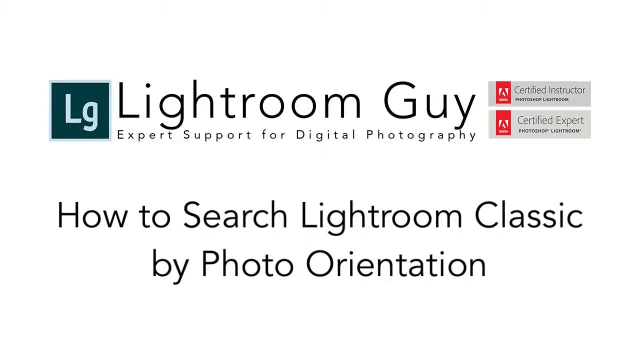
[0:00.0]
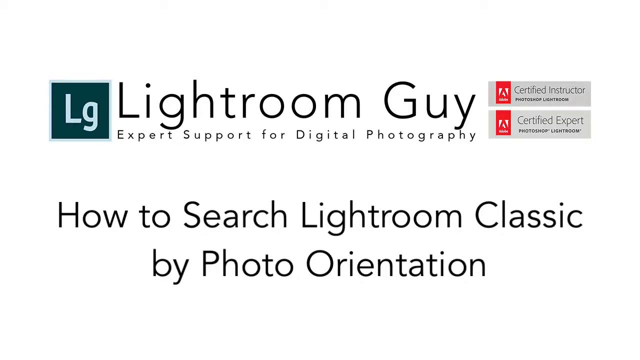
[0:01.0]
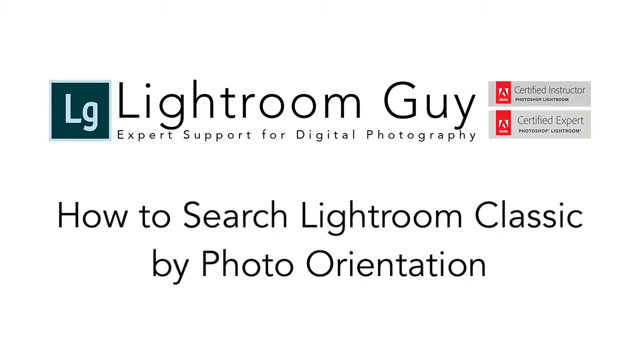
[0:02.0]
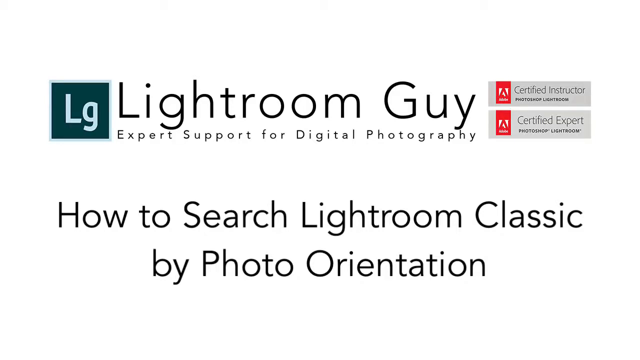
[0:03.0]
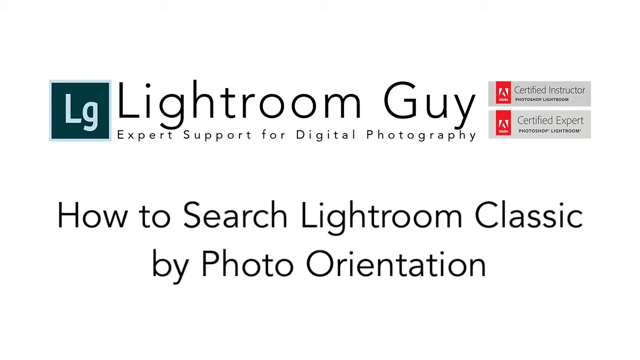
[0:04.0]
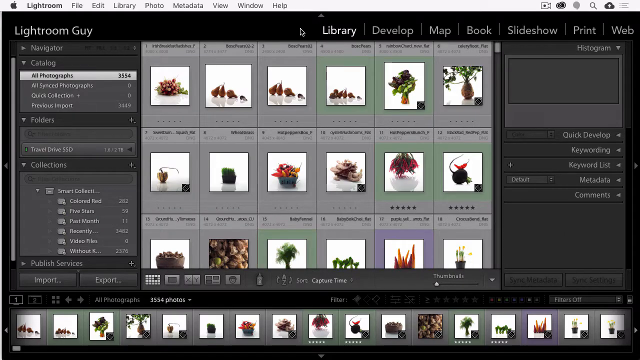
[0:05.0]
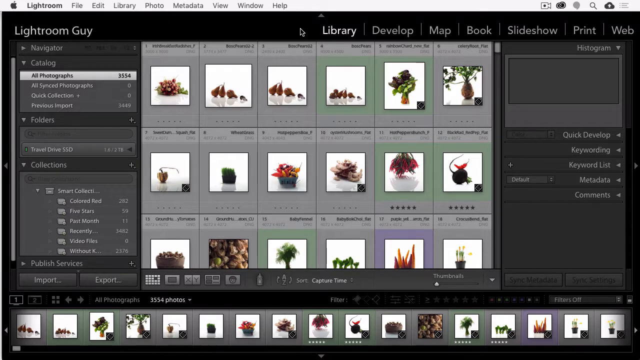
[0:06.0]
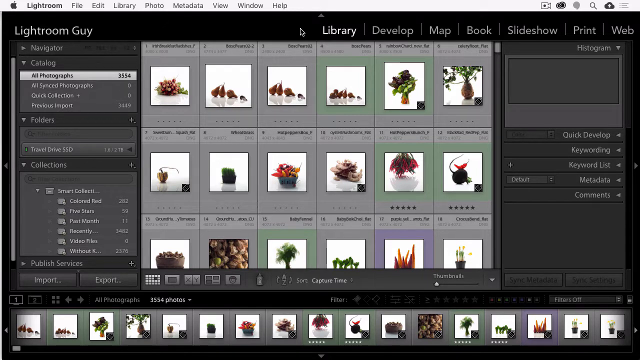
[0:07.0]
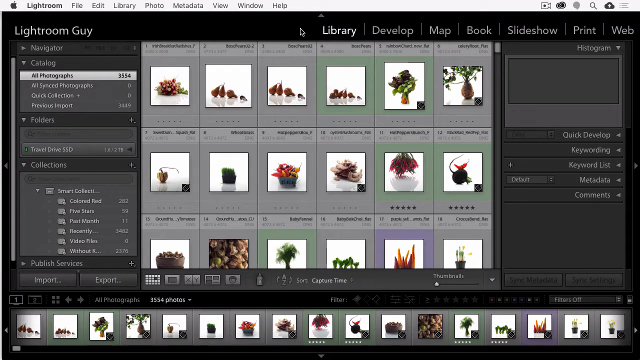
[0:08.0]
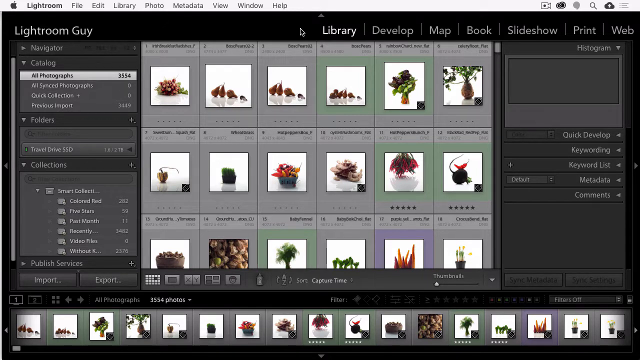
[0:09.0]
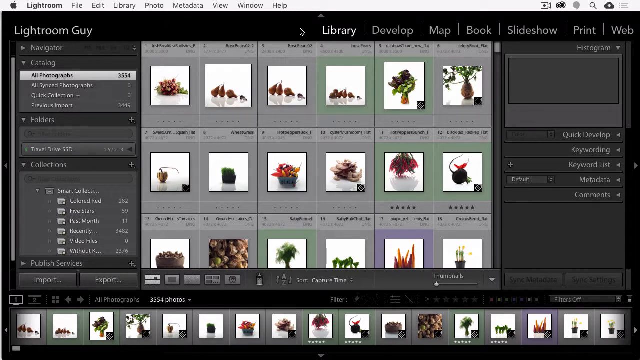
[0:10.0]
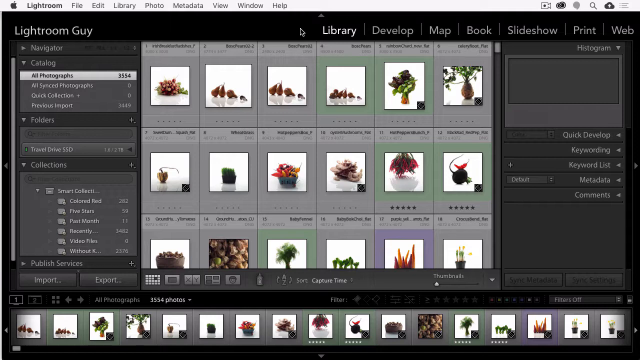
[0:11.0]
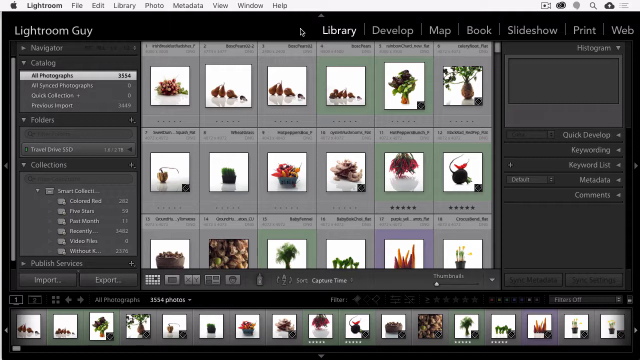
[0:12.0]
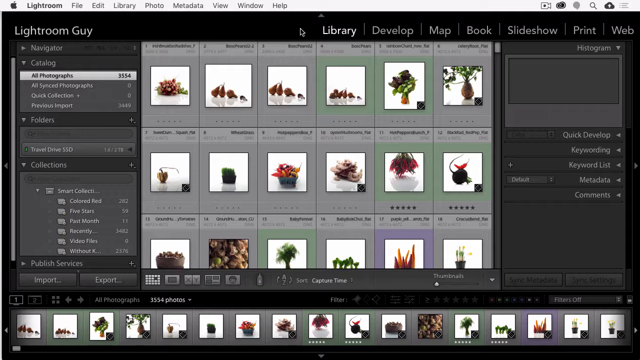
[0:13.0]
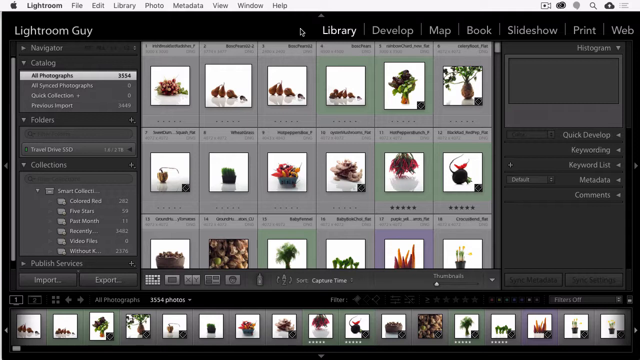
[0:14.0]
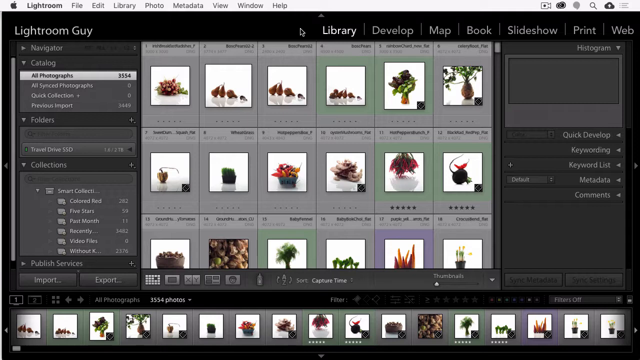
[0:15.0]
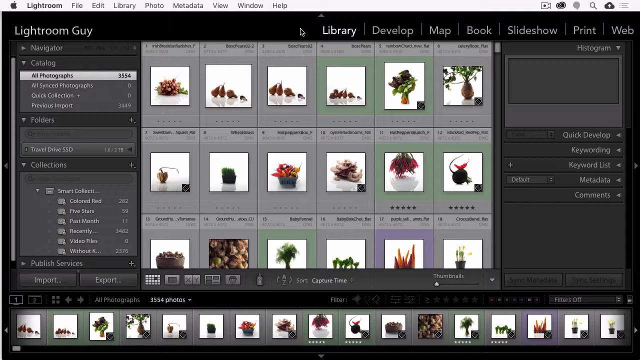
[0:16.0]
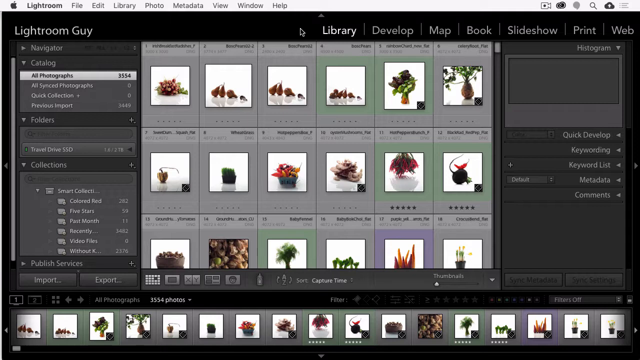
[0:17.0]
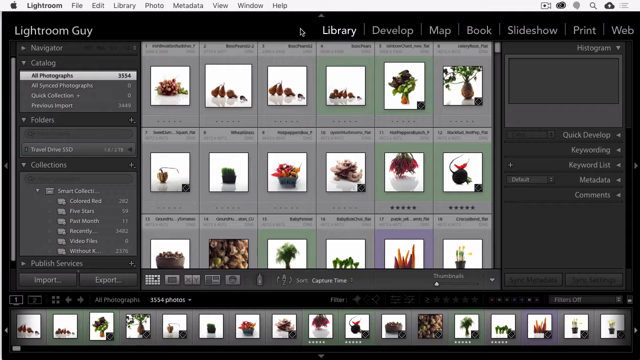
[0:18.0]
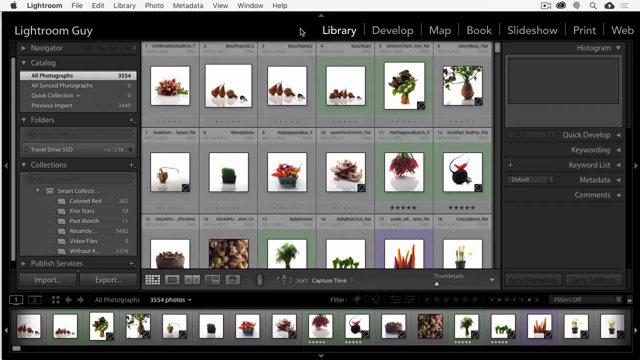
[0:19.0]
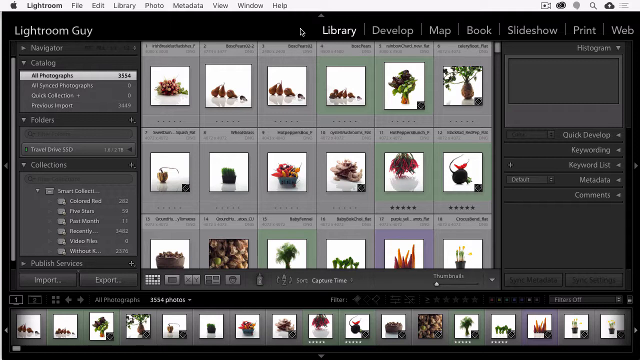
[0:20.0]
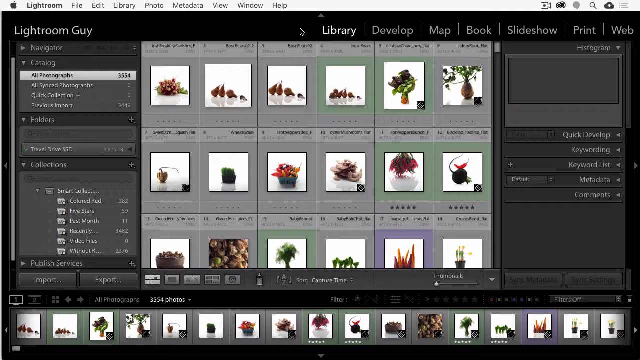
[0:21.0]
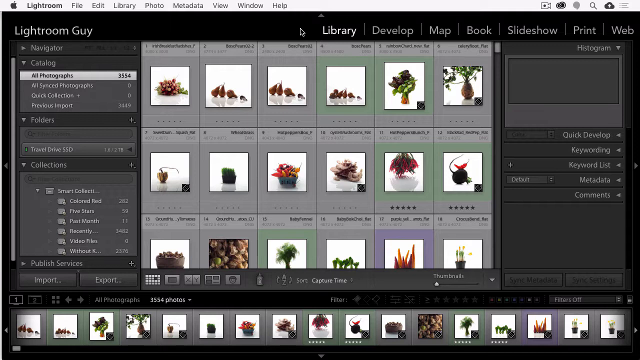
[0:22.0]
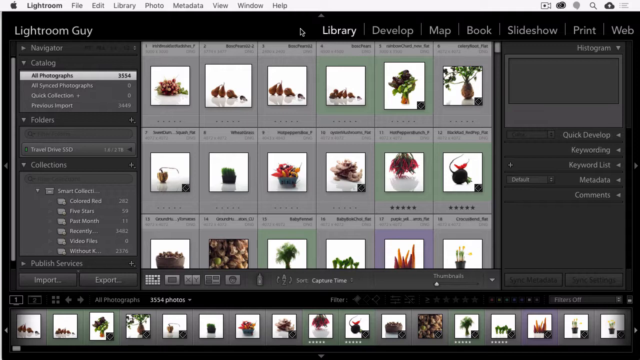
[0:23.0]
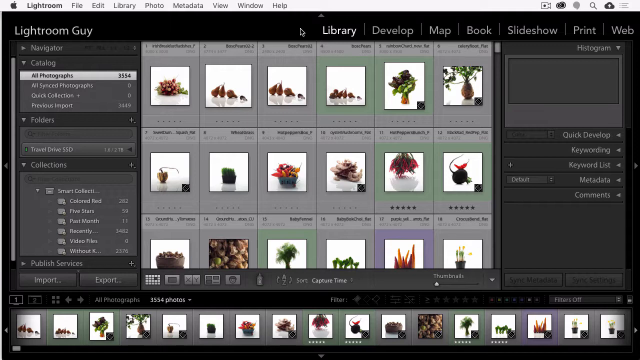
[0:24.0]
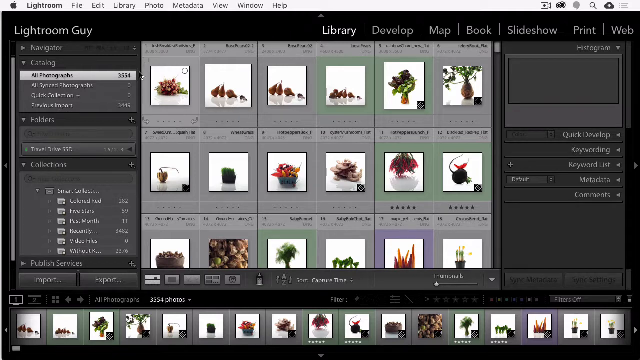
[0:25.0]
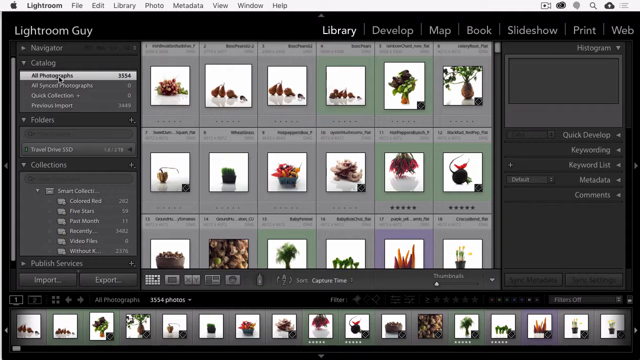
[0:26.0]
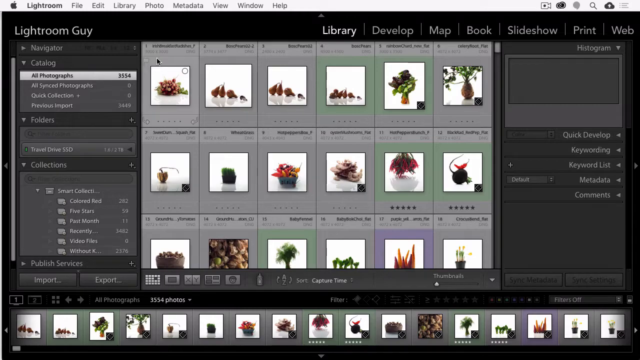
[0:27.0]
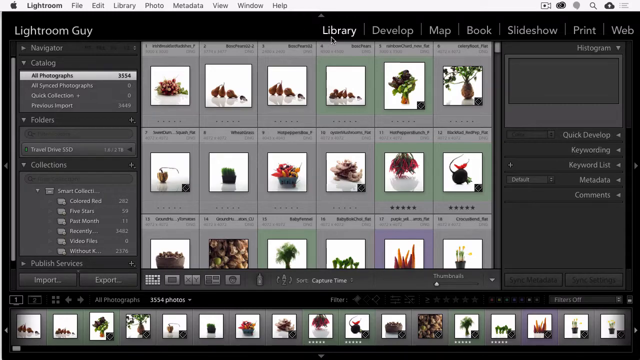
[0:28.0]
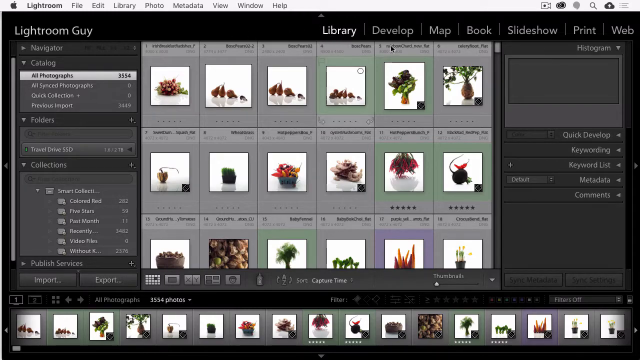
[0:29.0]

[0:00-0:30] The video is titled "How to Search Lightroom Classic by Photo-Orientation" and comes from Lightroom Guy, who offers expert support for digital photography and is certified as both an instructor and an expert in Photoshop Lightroom. The screen then shows a photo library in the Library module. The left sidebar displays options such as All Photographs and Collections. The main window shows a grid of 18 thumbnail photos of plants and flowers, with an additional thumbnail partly visible at the bottom. The interface suggests the user is organizing, editing or sorting the plant photos. Other options available include Develop, Map, Book, Slideshow, Print and Web.